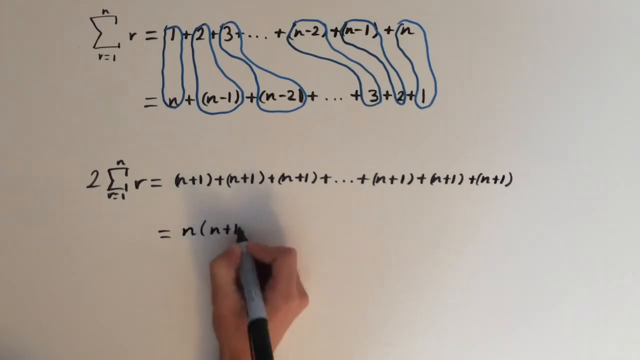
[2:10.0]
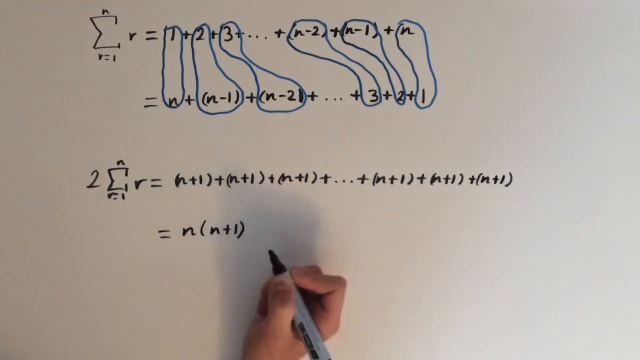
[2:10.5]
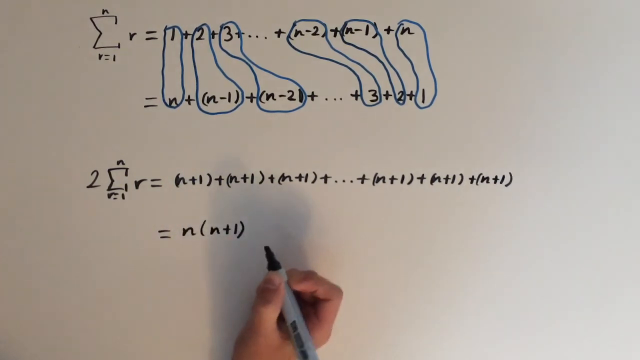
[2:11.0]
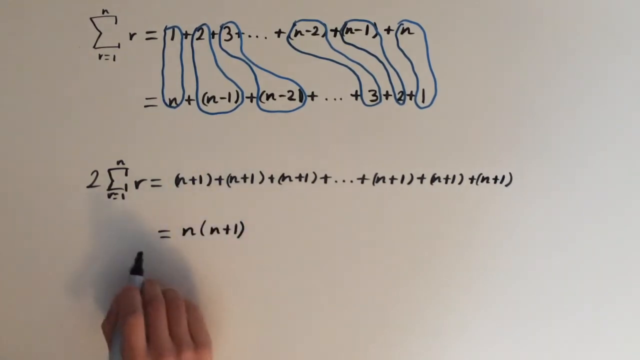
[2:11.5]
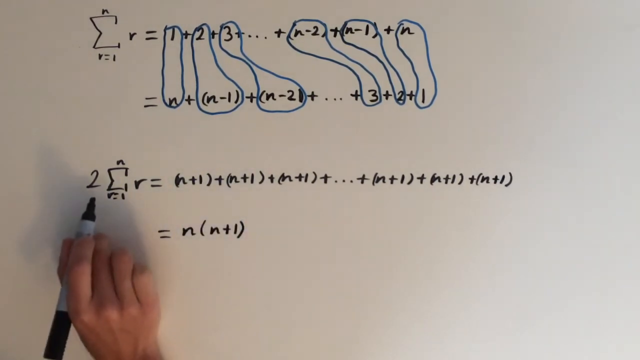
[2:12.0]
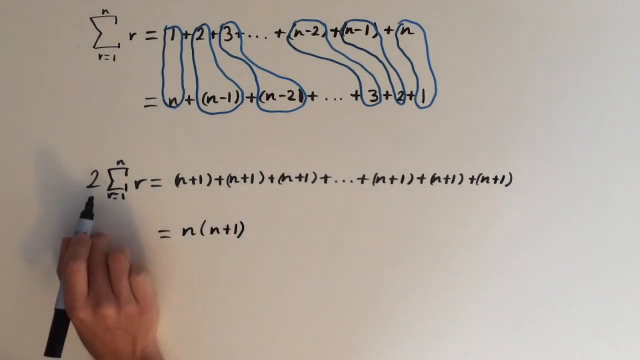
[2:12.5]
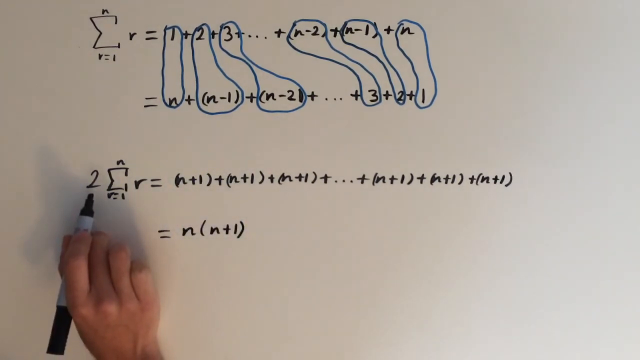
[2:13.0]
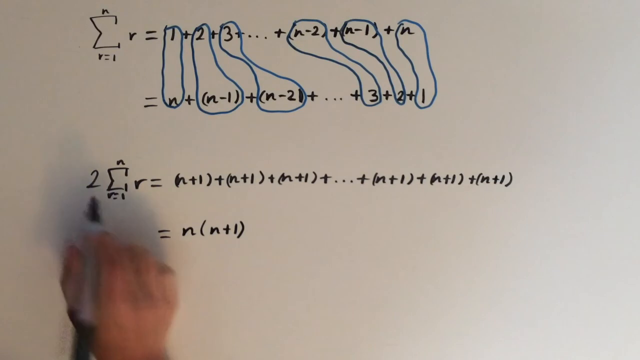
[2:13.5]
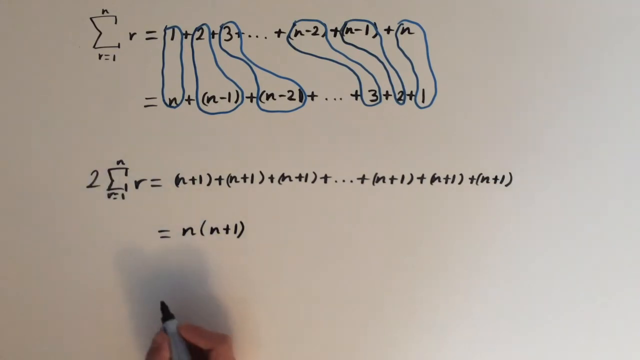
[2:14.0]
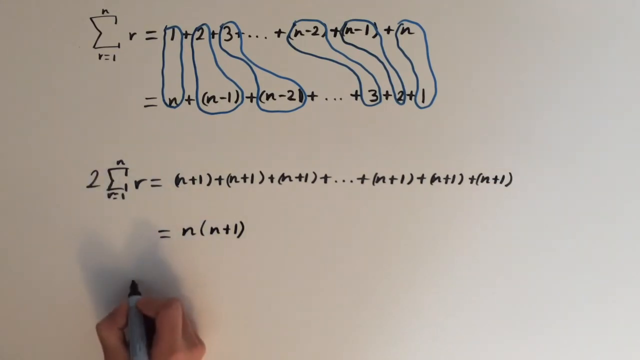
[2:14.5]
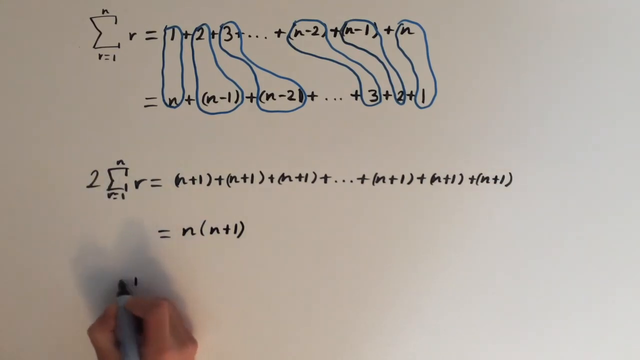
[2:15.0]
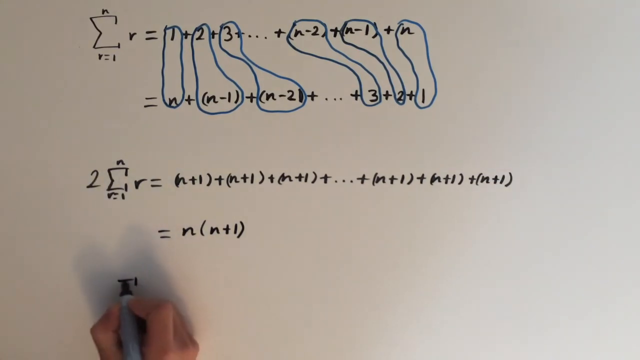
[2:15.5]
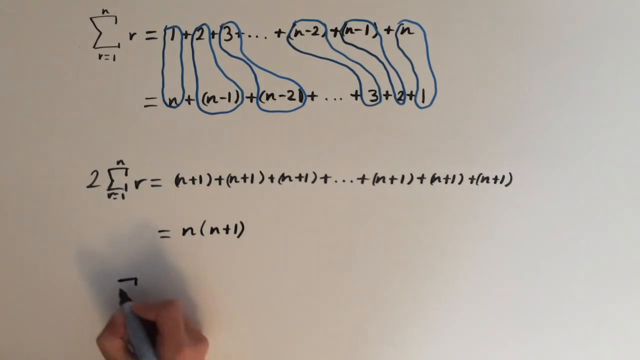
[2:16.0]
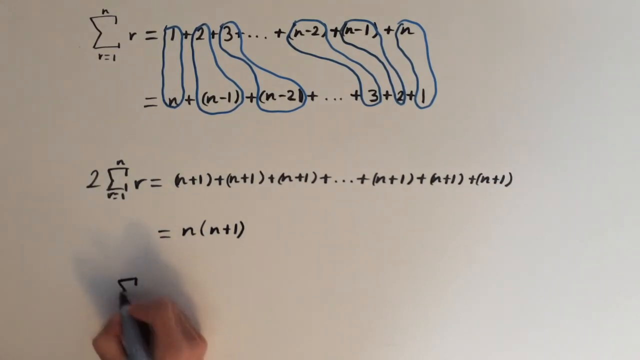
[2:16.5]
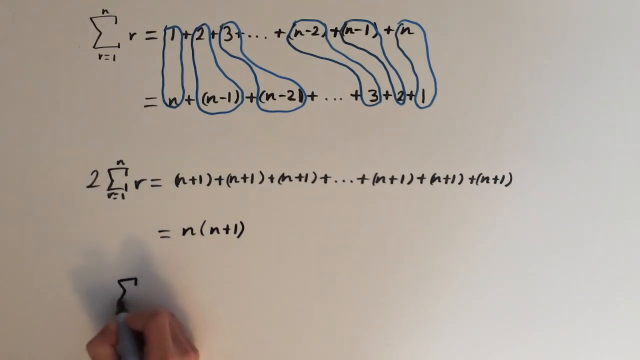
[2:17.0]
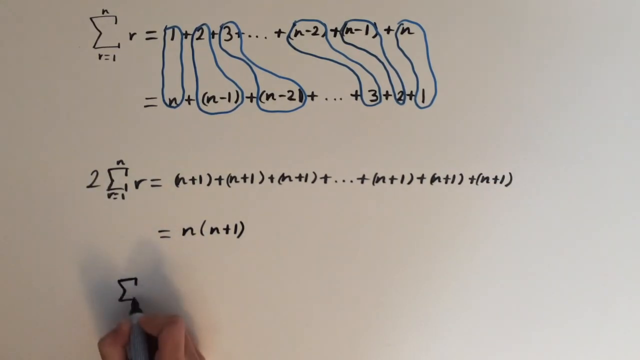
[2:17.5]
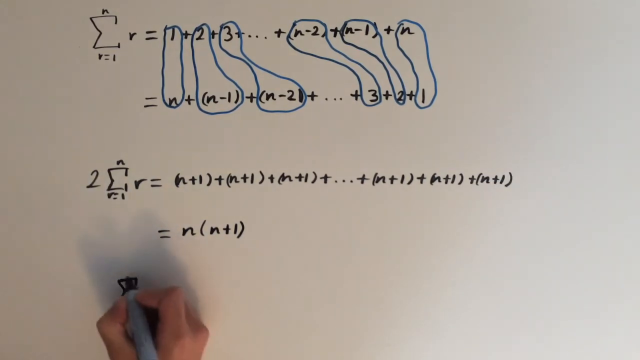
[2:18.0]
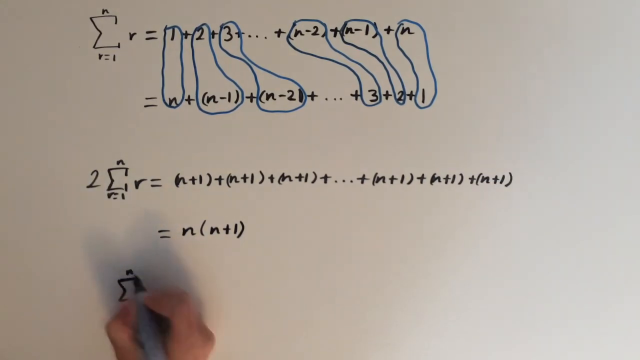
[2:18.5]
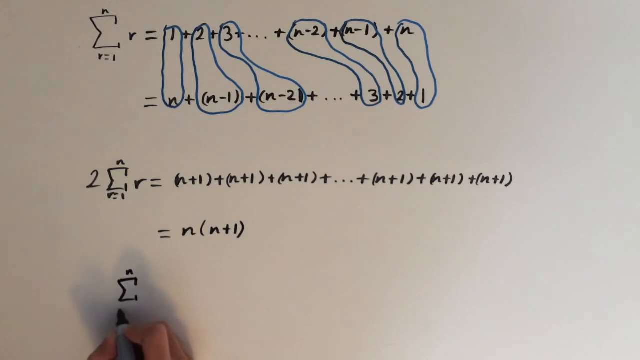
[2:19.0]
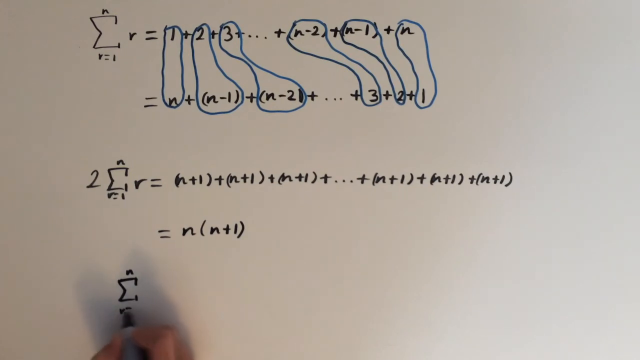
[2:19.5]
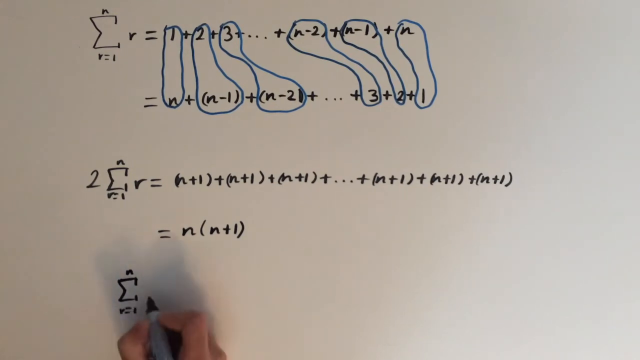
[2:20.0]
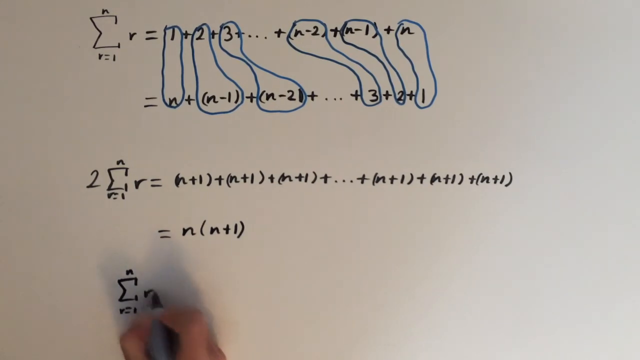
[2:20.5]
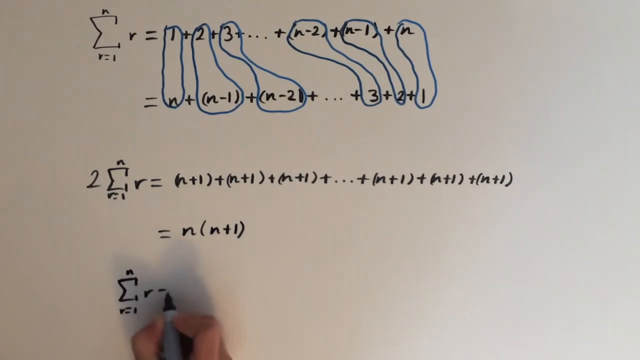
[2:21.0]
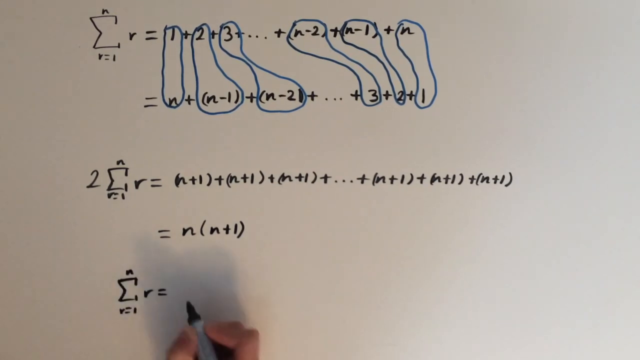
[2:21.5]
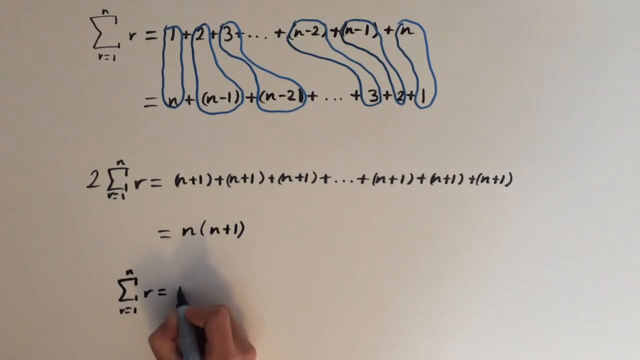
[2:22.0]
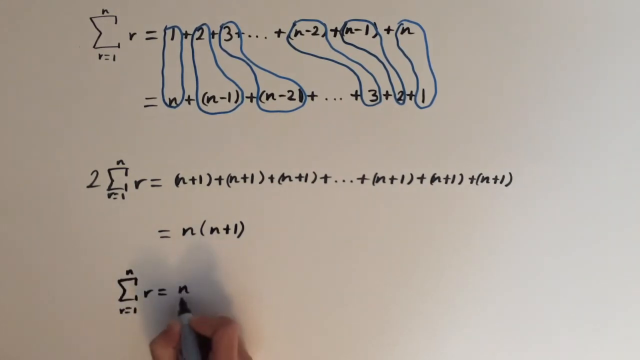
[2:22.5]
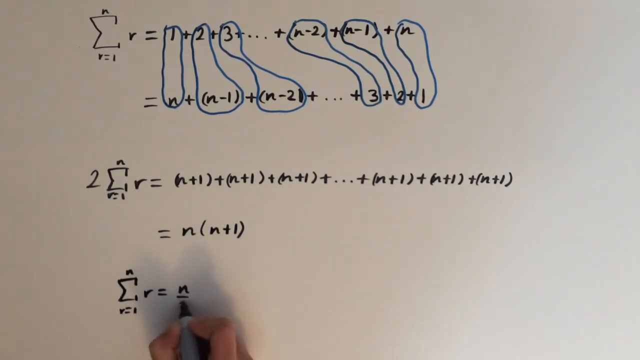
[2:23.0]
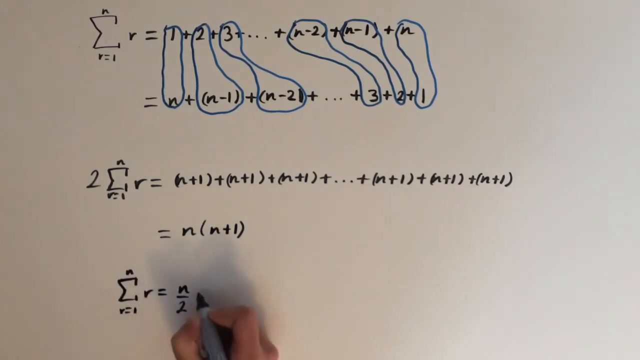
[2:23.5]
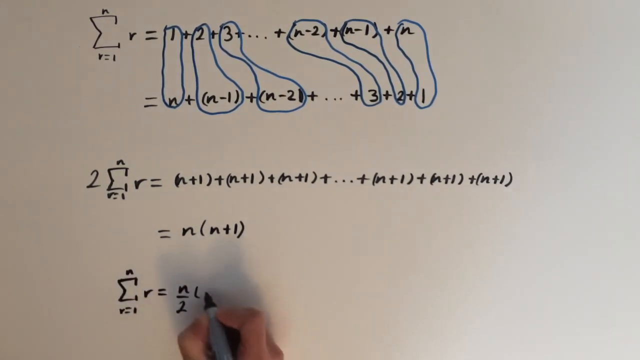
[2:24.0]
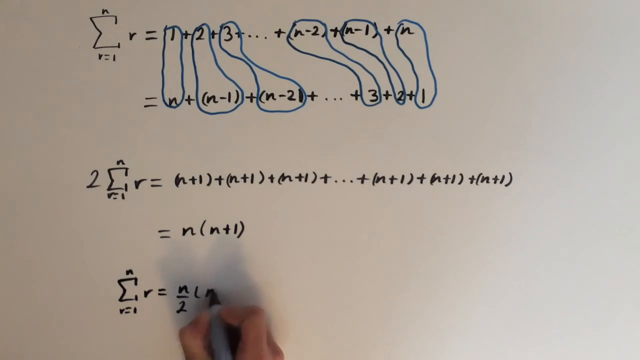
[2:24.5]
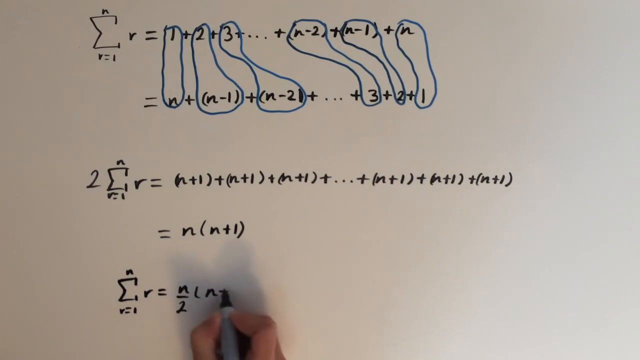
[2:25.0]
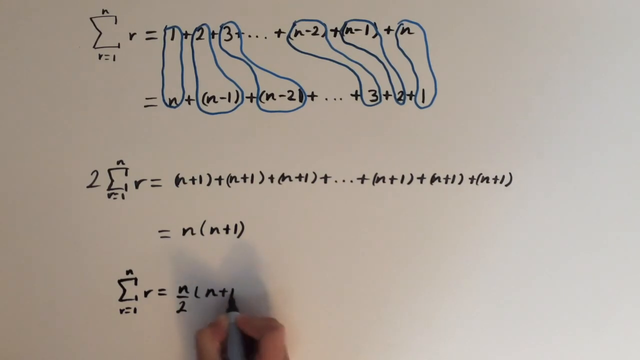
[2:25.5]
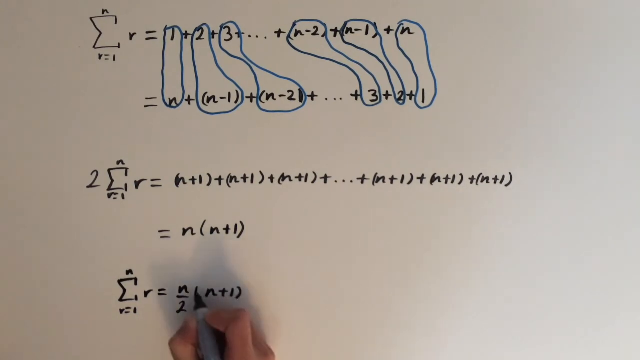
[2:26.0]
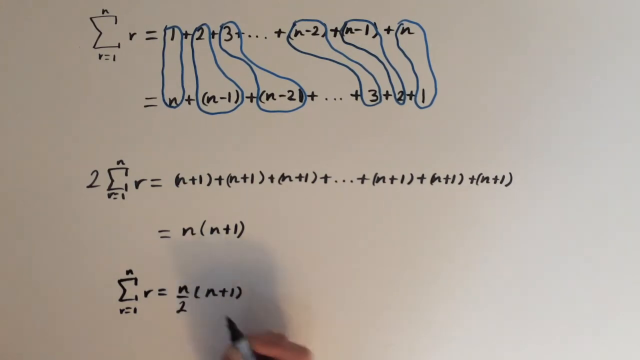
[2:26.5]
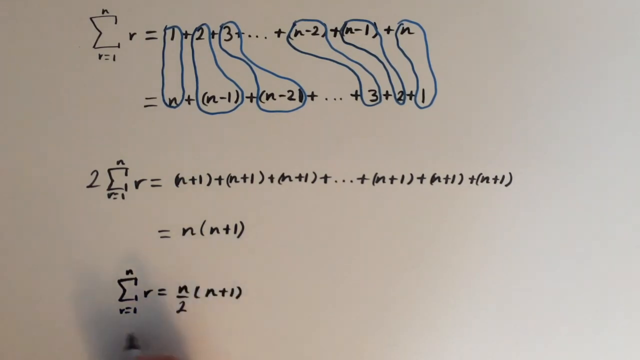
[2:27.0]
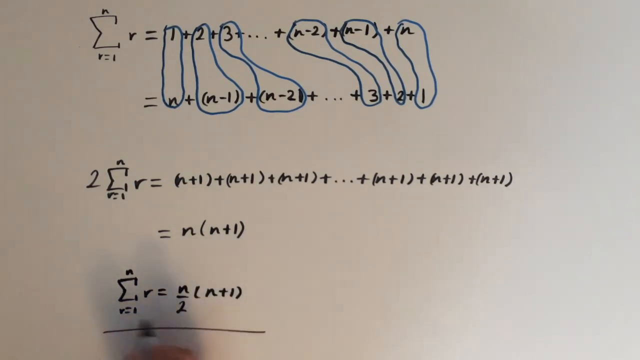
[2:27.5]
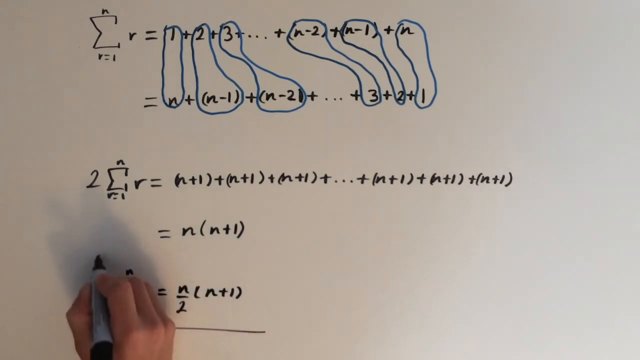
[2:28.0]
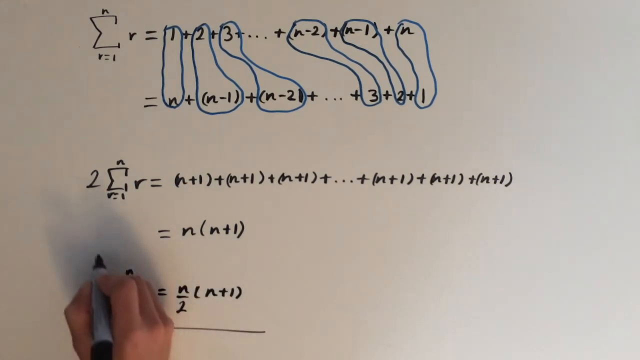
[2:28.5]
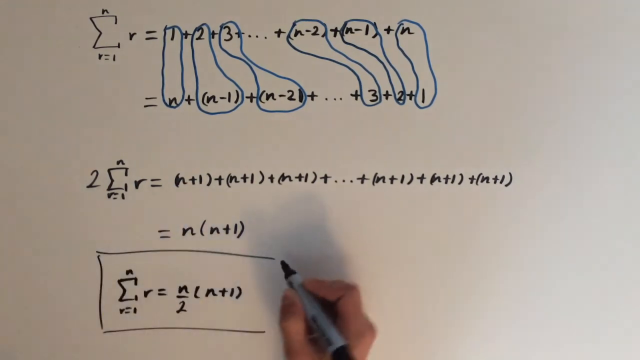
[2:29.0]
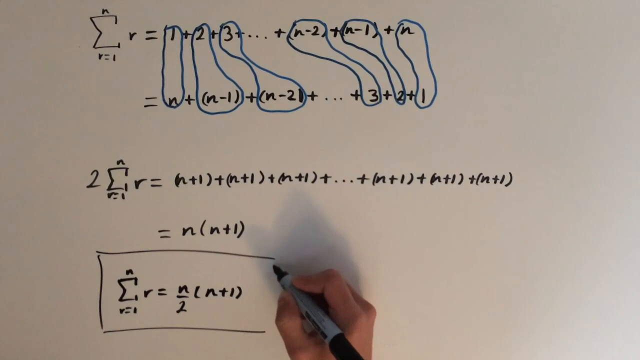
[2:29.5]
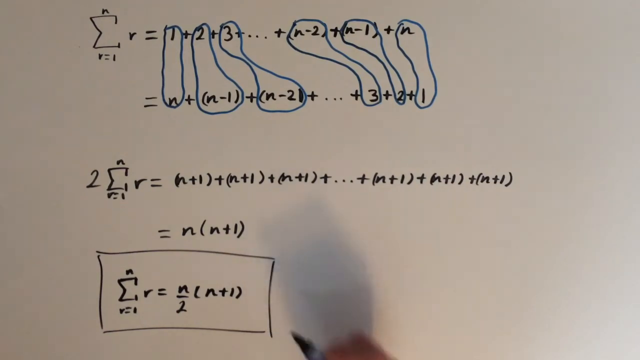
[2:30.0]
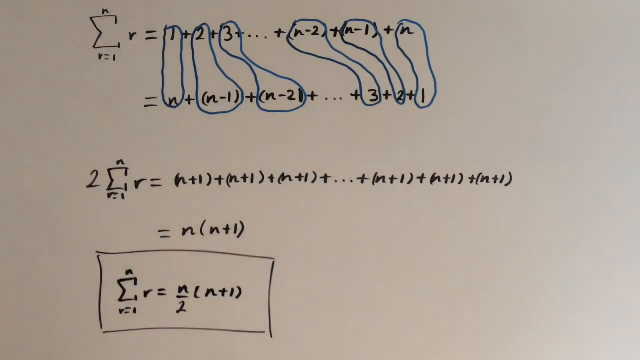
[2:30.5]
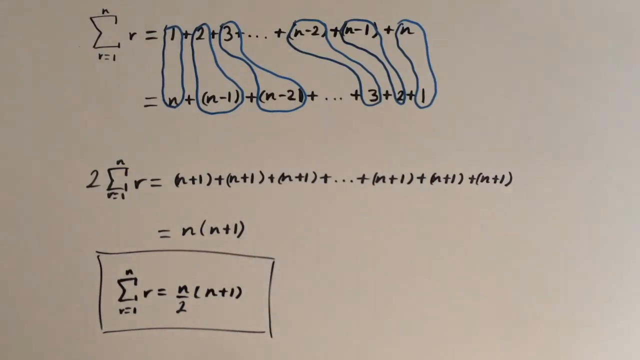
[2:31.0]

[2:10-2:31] On the third line, the host writes "= n(n + 1)", then points back at the second line with the marker. On the fourth line he writes that the sum of r, for r = 1 to n, equals n/2 (n + 1). The different colours and bubbles mark which elements are rewritten as which.